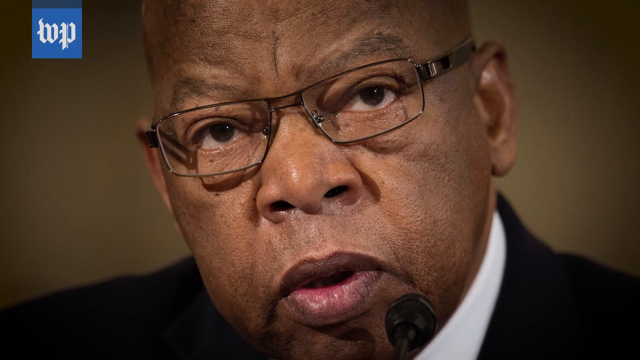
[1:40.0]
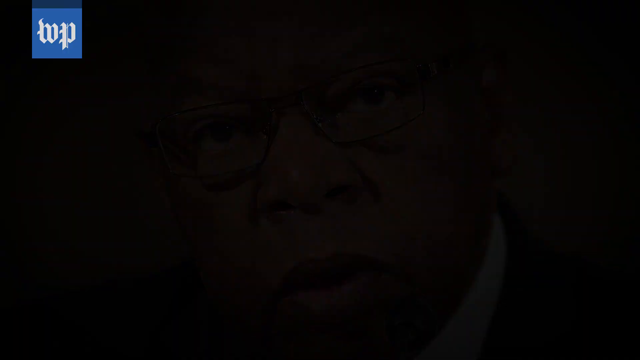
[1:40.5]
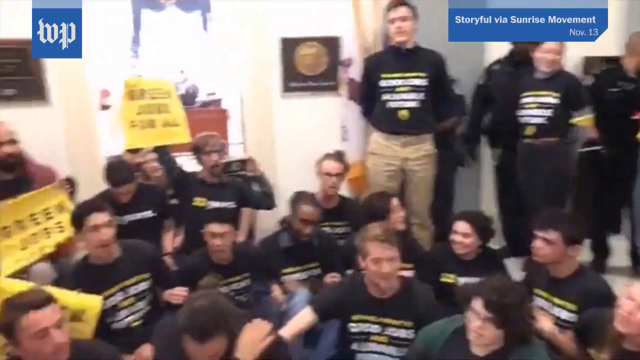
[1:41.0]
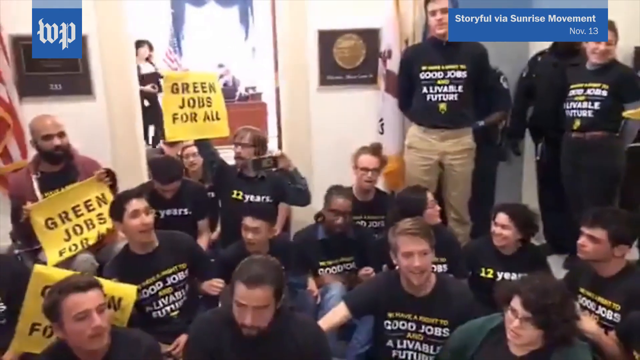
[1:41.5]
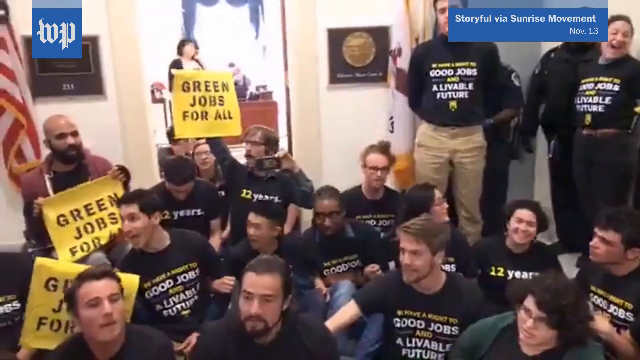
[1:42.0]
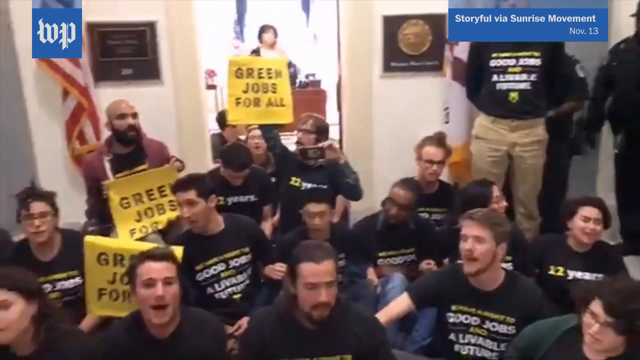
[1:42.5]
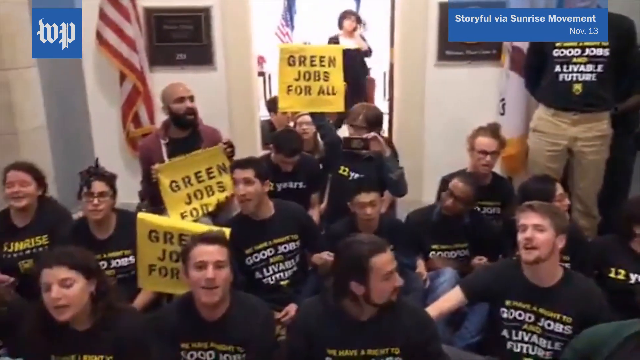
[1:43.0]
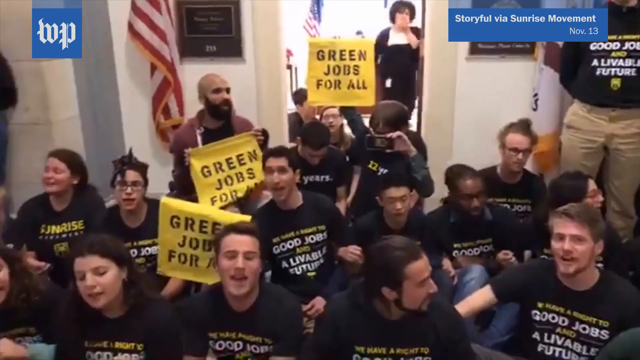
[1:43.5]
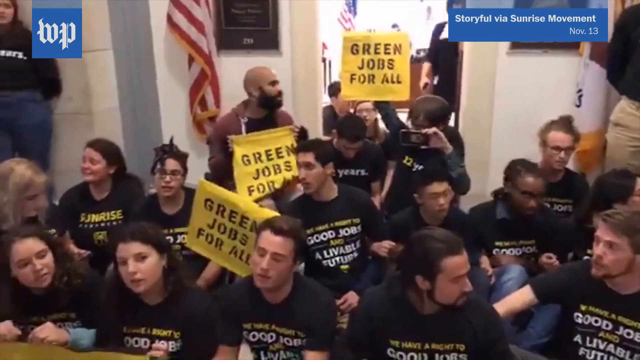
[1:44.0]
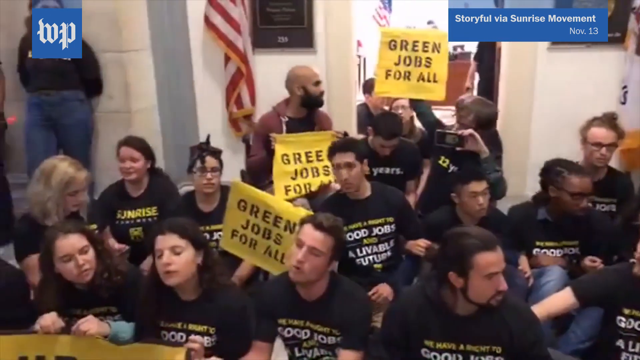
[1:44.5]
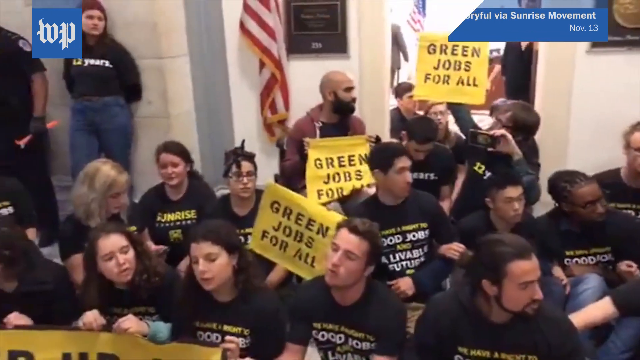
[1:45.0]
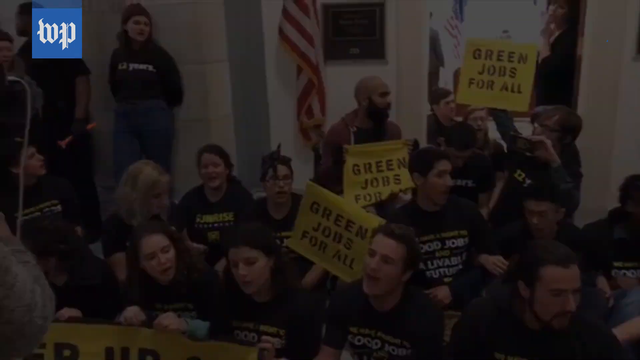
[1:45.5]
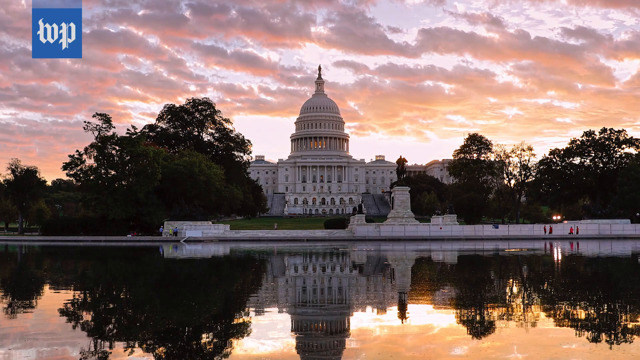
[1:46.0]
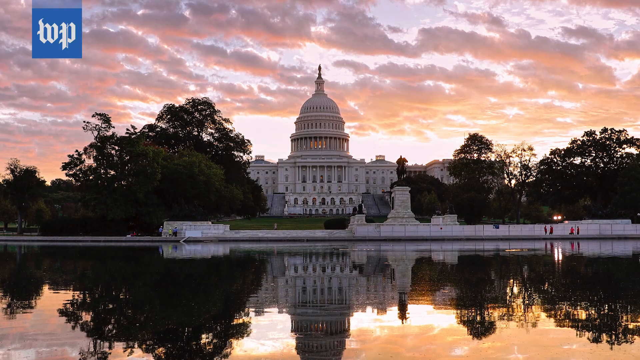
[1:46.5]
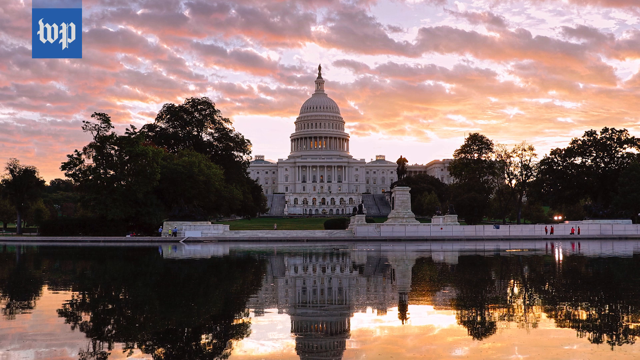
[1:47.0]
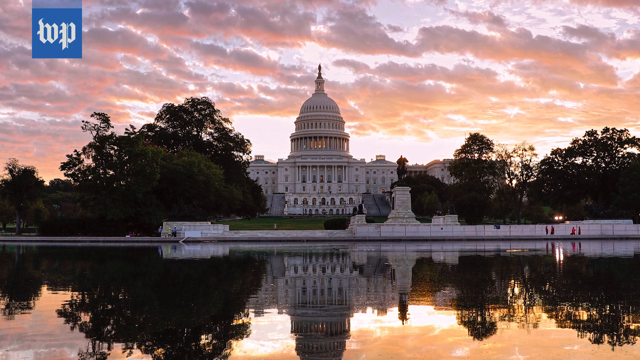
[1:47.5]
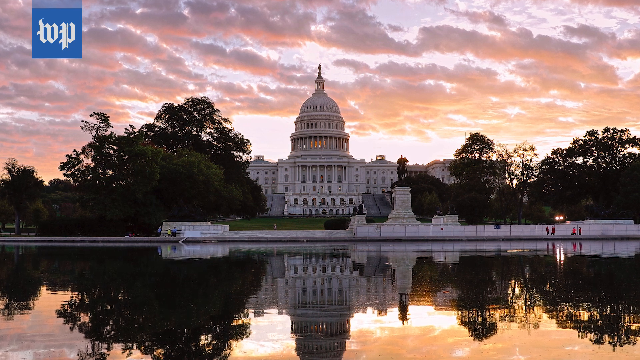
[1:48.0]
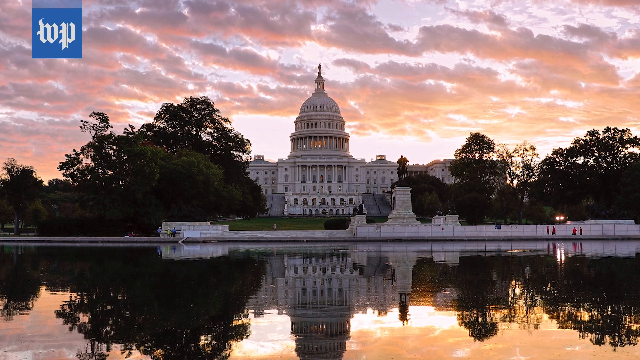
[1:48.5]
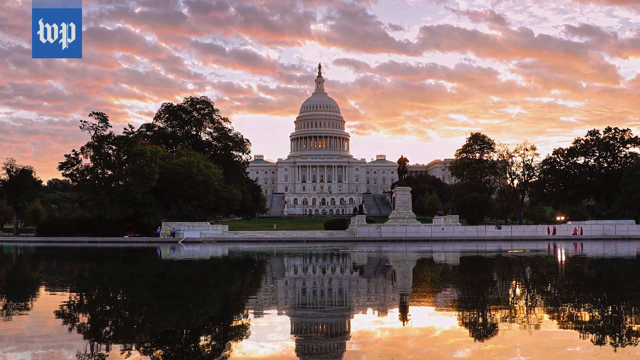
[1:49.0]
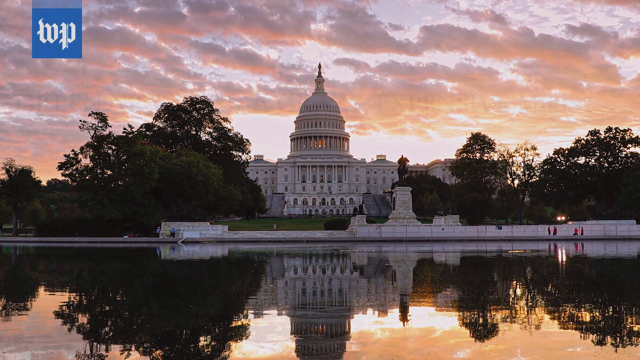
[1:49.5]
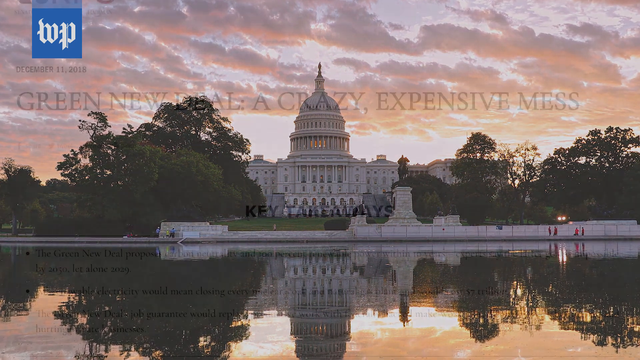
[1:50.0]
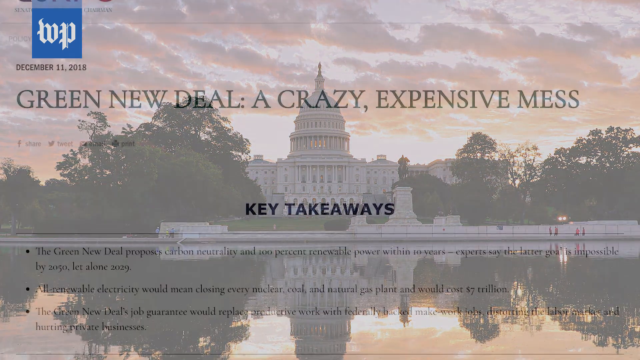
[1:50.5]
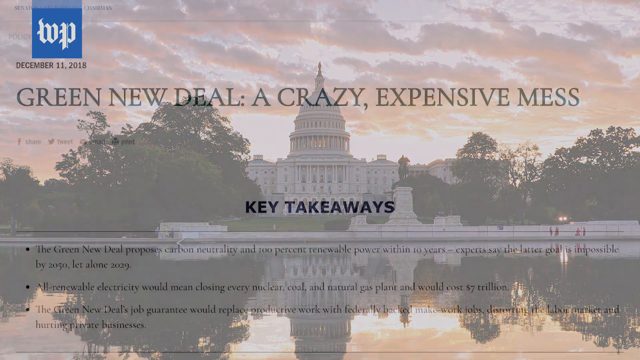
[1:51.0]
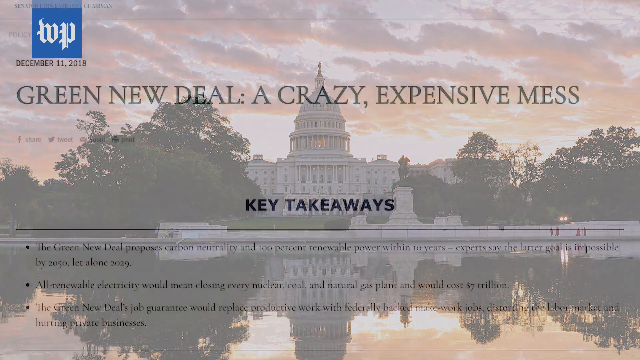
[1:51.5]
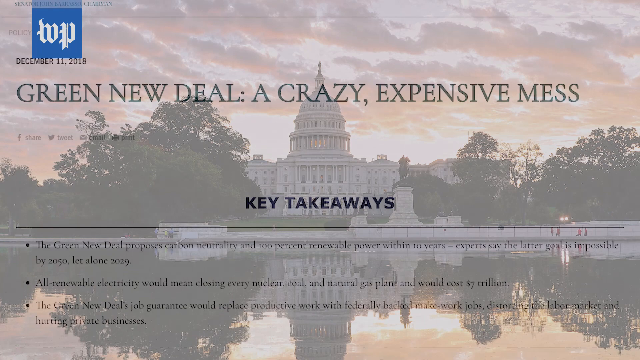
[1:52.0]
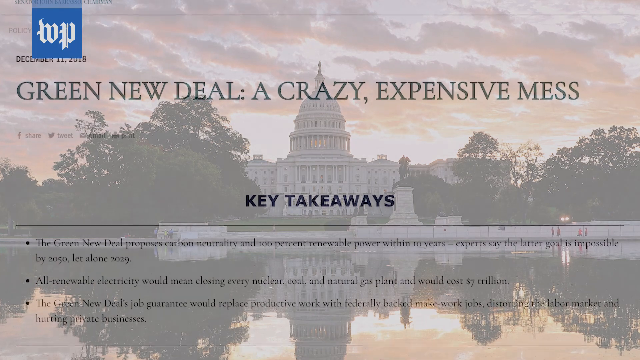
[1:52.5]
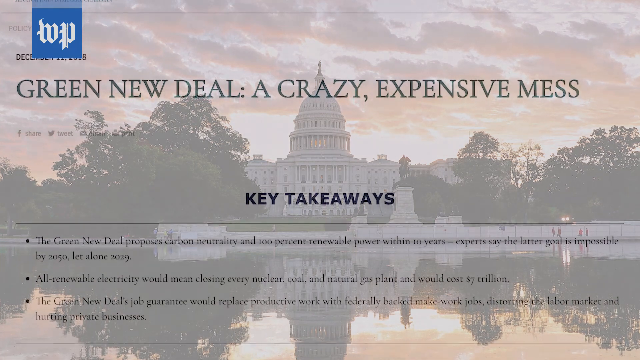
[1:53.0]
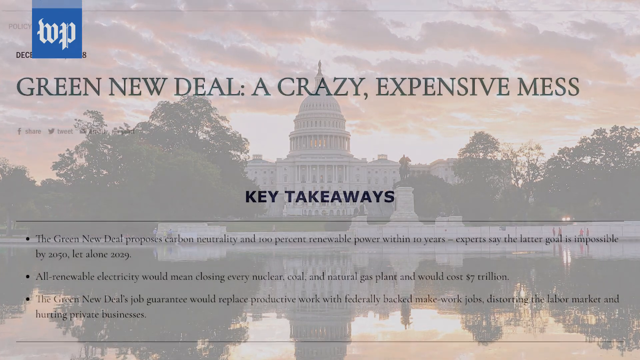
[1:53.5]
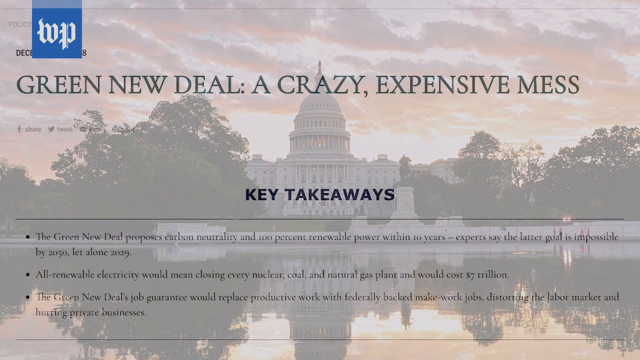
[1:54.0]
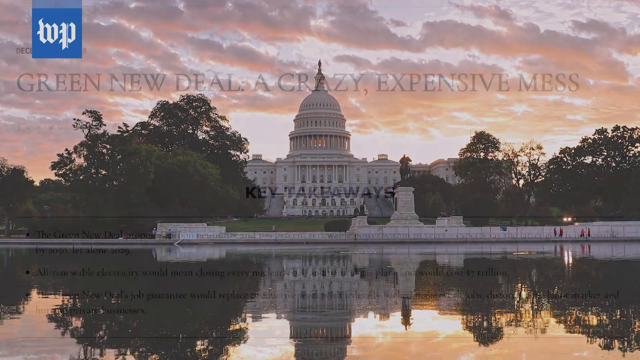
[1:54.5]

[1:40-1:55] A picture of Thurgood Marshall is shown. The video then returns to the young people of the Sunrise Movement and Green New Deal, whose shirts say "good jobs and a lovable future." They appear to be chanting. The camera then pans to the US Capitol. Text reads: "Green New Deal, a crazy expensive mess, key takeaways, Green New Deal proposes carbon neutrality and 100% renewable power within 10 years, experts say the latter goal is impossible by 2050, let alone 2029. All renewable electricity would mean closing every nuclear, coal and natural gas plant and it would cost $7 trillion."